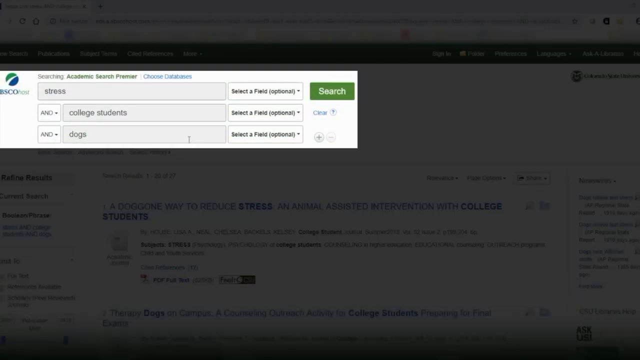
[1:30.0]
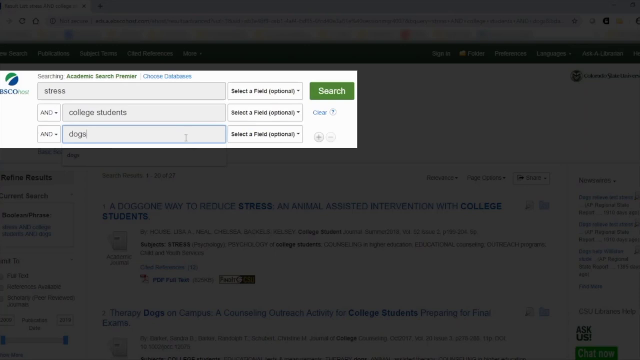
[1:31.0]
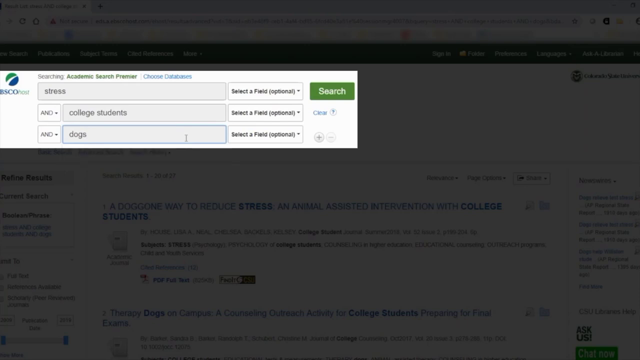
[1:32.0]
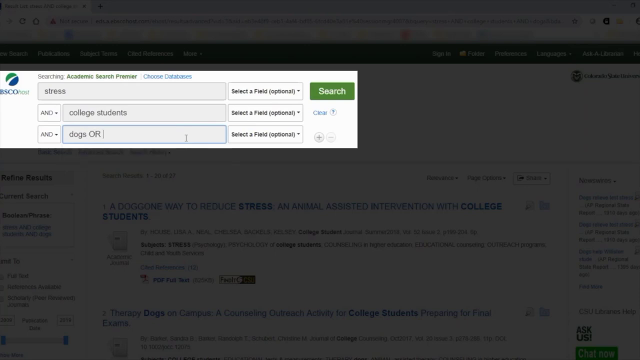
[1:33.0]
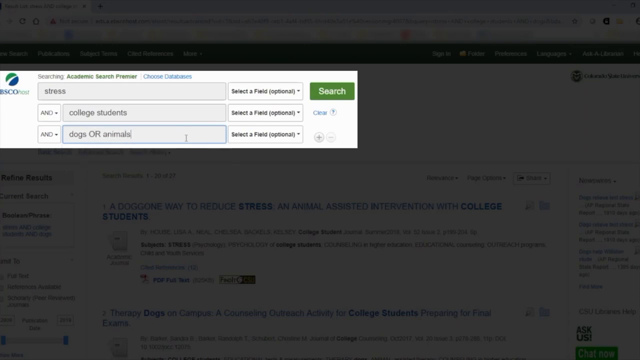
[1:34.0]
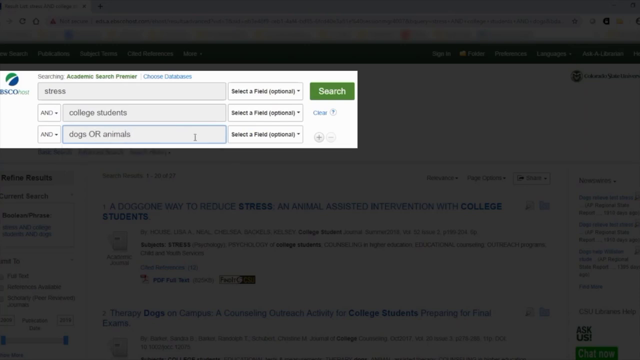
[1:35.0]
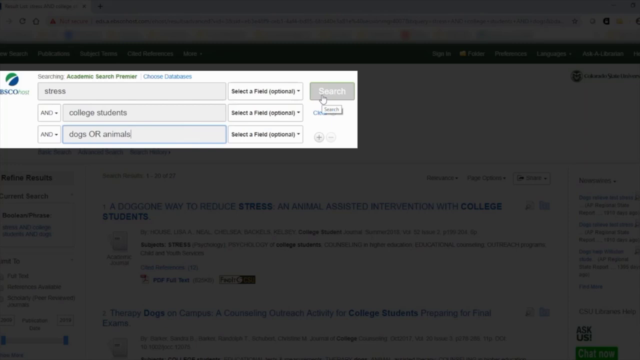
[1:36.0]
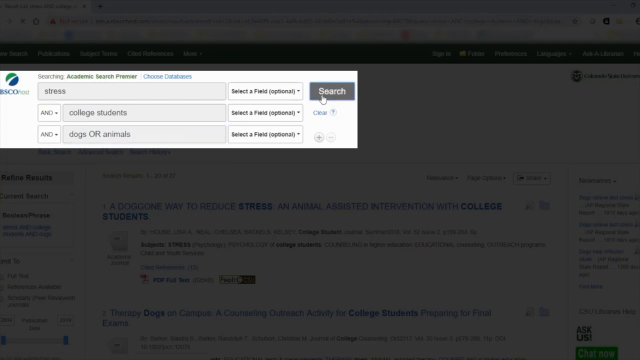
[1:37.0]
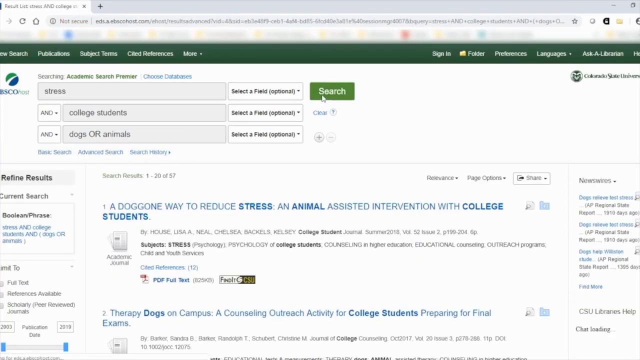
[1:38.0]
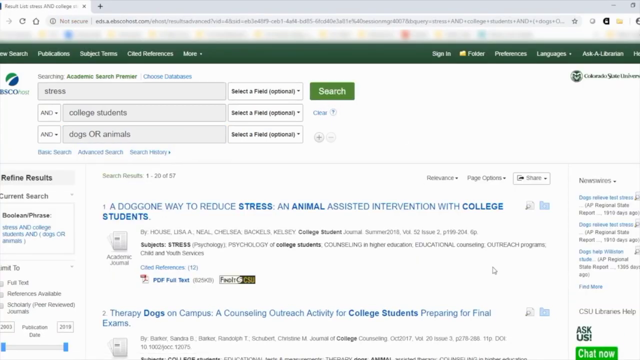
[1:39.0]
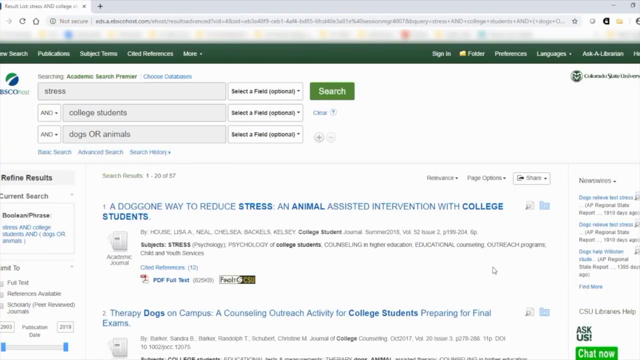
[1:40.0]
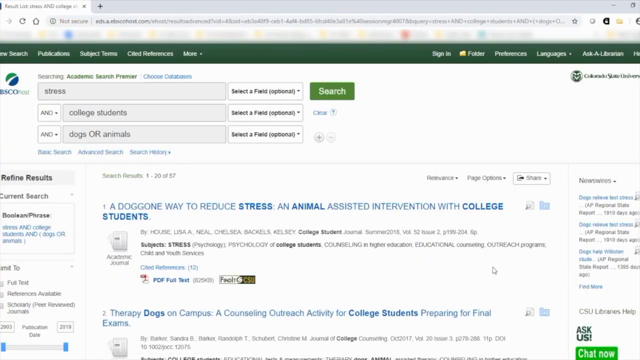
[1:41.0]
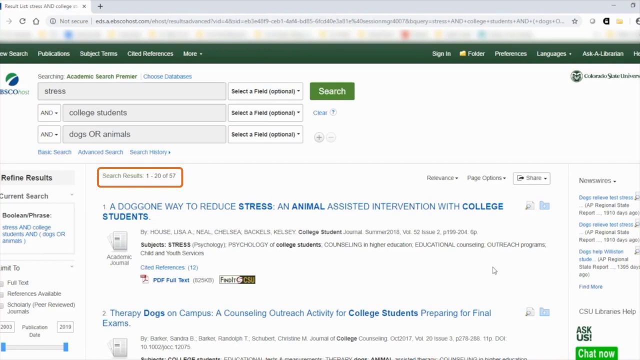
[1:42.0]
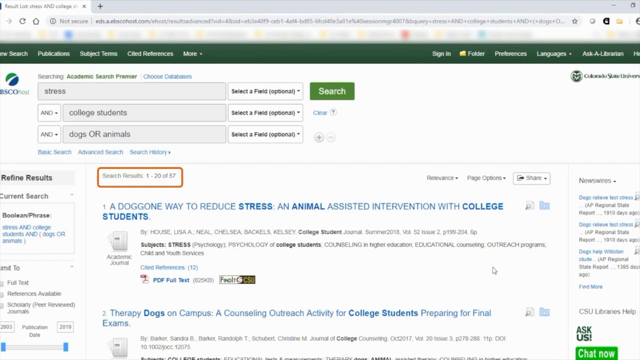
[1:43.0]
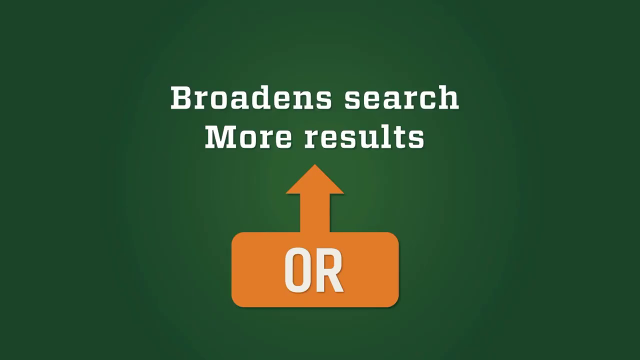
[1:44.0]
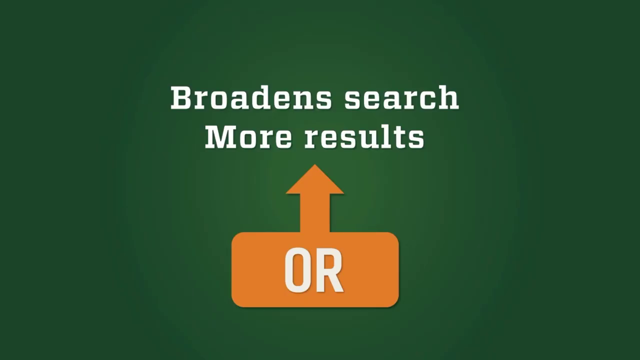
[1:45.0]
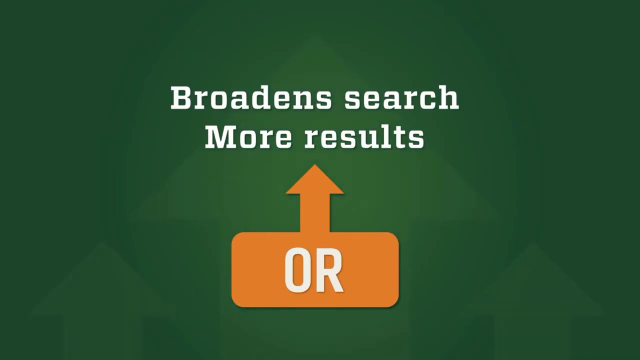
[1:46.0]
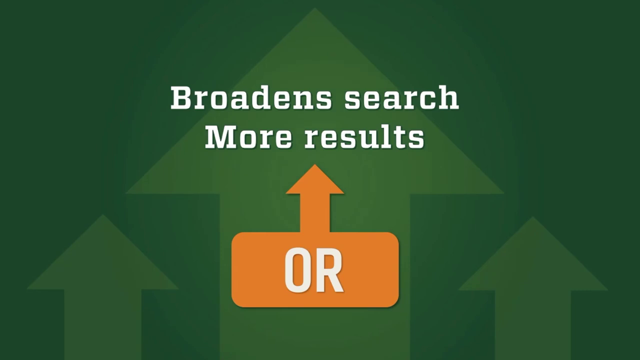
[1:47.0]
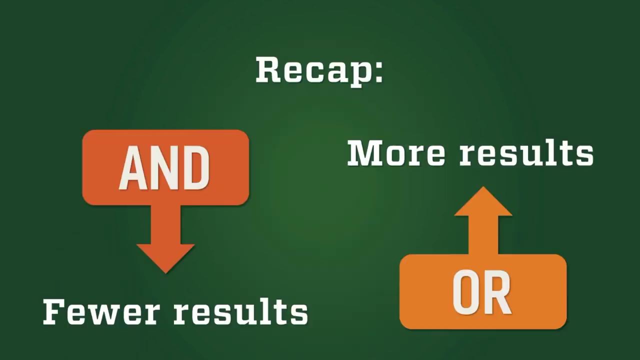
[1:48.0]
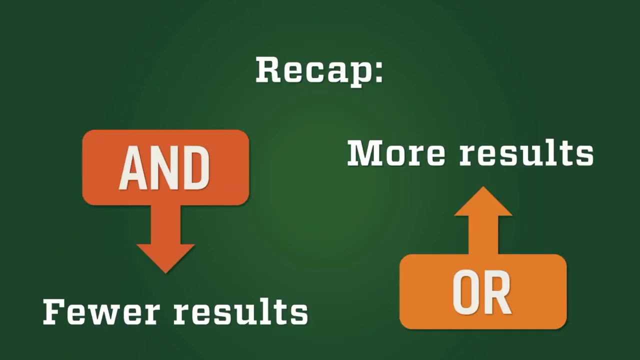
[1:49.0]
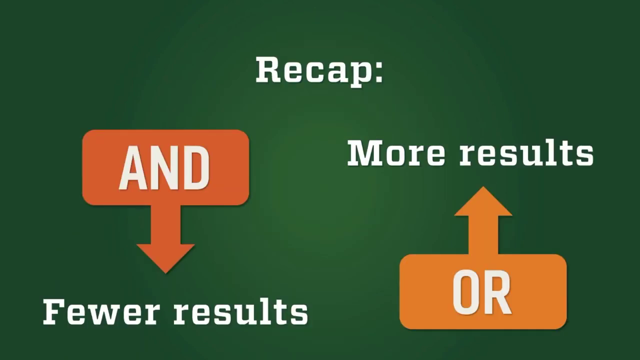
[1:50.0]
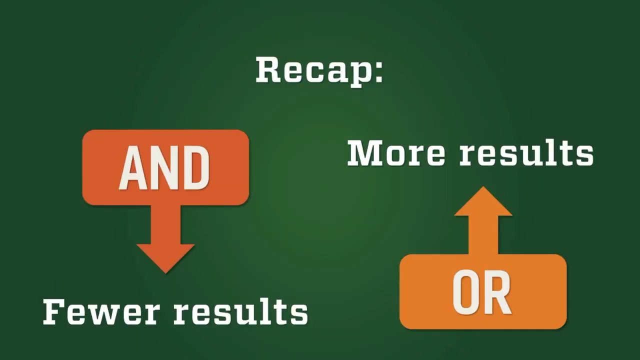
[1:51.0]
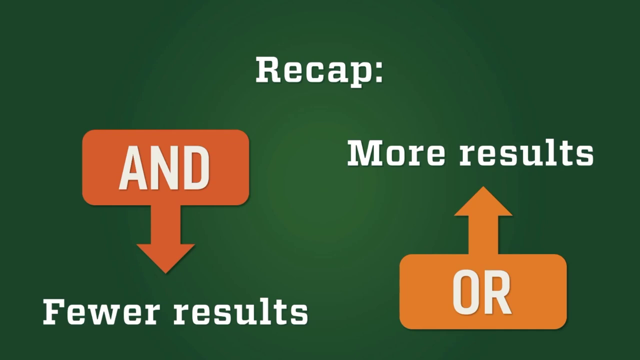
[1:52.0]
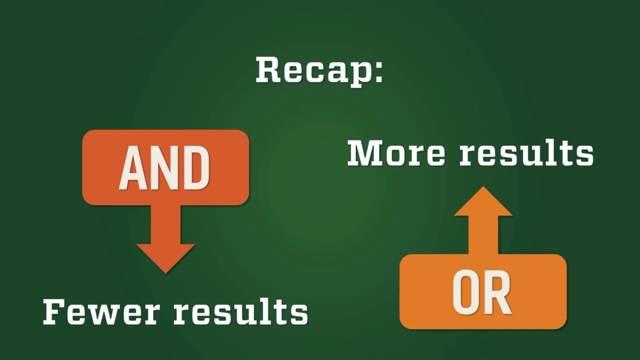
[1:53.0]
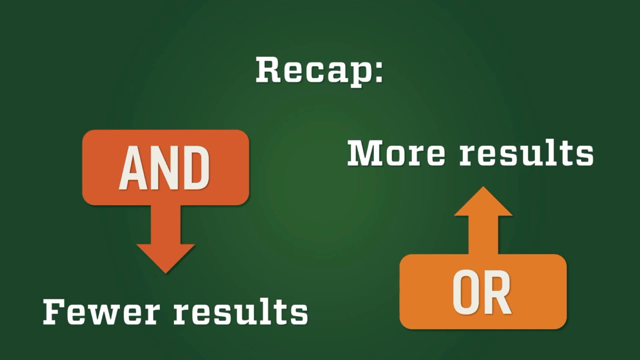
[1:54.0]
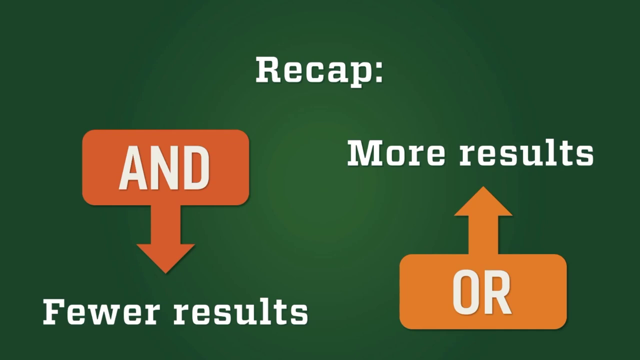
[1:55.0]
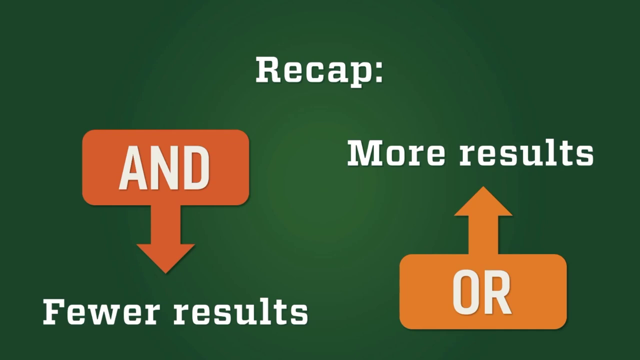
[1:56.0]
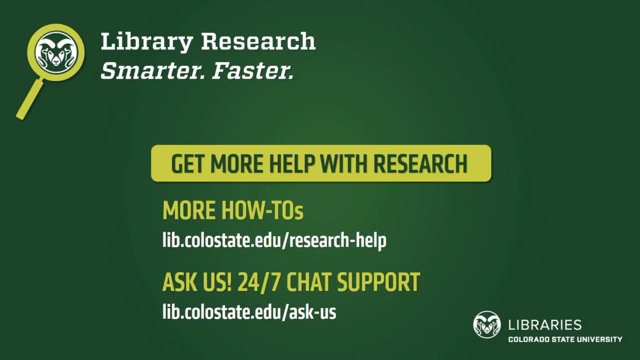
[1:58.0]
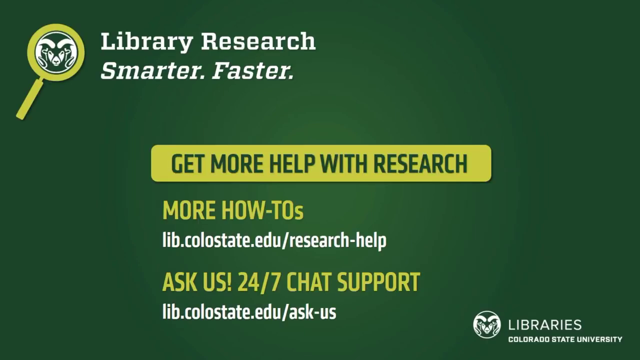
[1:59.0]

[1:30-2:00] The background screen is darkened so the writing is still visible but not clear. A little square at the top, toward the middle top left, is highlighted. There are three boxes to the left and three to the right, and a green search box with "search" written in white. The three boxes are for typing, with down arrows for selecting categories in each. Someone types "dogs or animals" in the bottom box and clicks search. A screen comes up and a red bar is selected around an area. Text reads "broaden search" and "more results", and a yellow box shows "or". A recap shows "and" and "or", with "more results" above "or" and "fewer results" under "and", on a green screen. Another screen then comes up reading "library research, smarter, faster", with "get more help with research" in a gold box, "more how-tos", and "access 24-7 chat support", all in a green box, along with a website address for help and a website address for access.